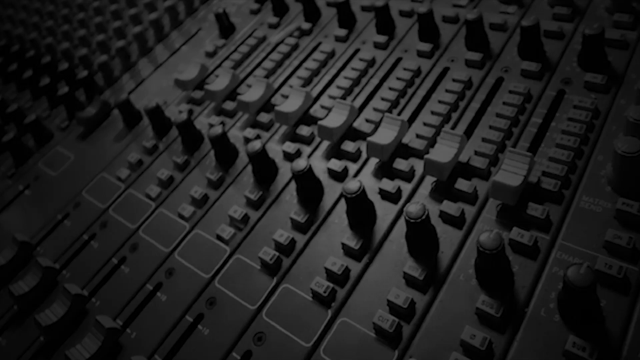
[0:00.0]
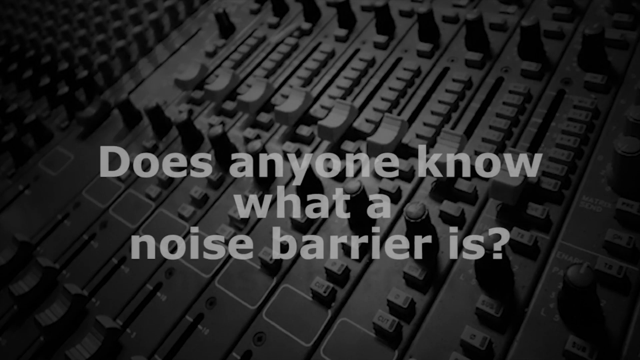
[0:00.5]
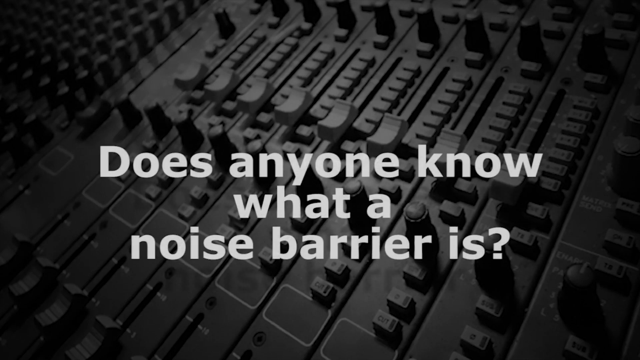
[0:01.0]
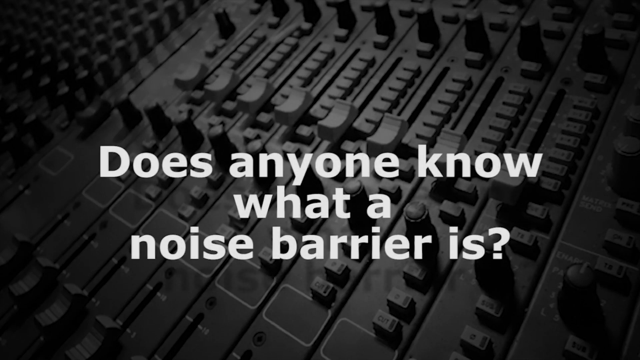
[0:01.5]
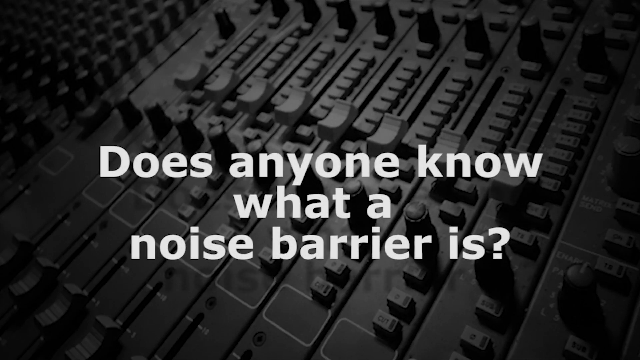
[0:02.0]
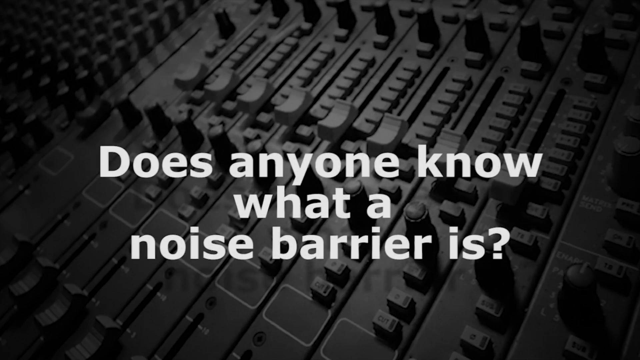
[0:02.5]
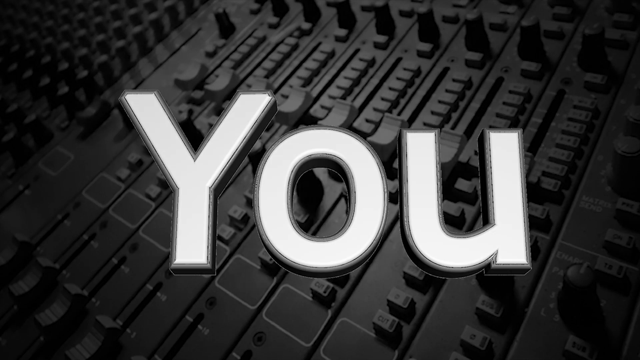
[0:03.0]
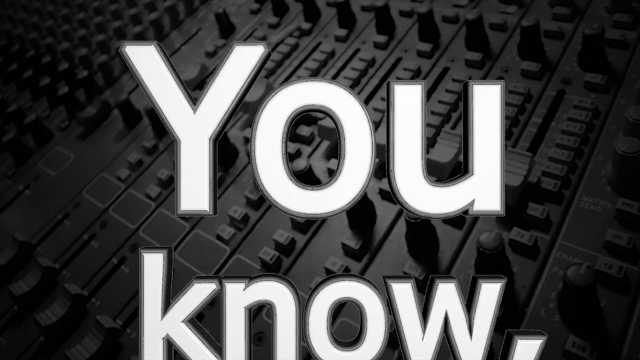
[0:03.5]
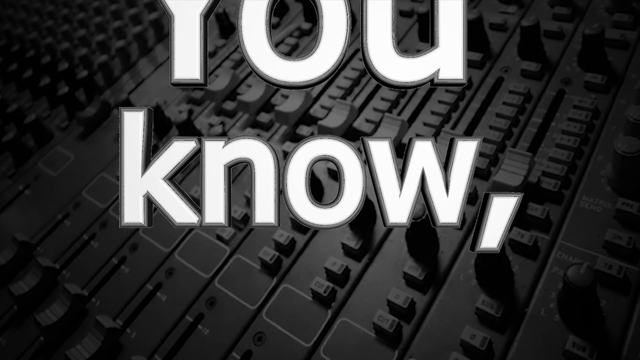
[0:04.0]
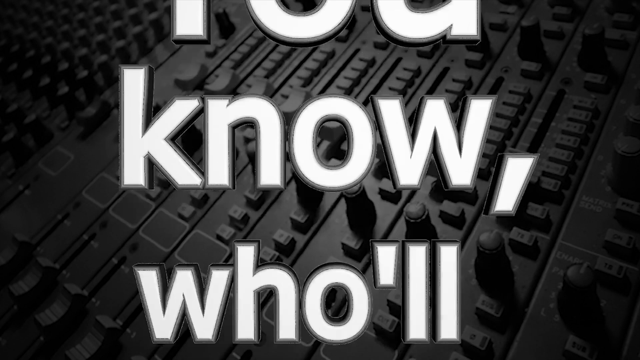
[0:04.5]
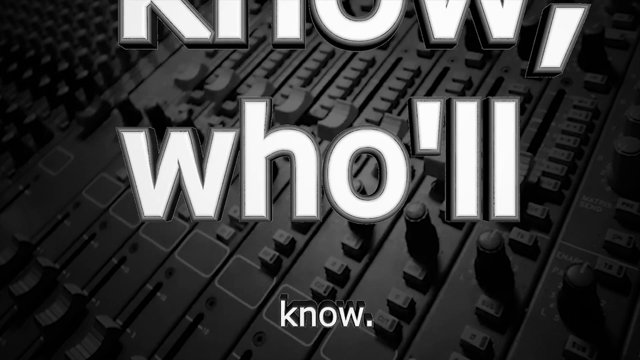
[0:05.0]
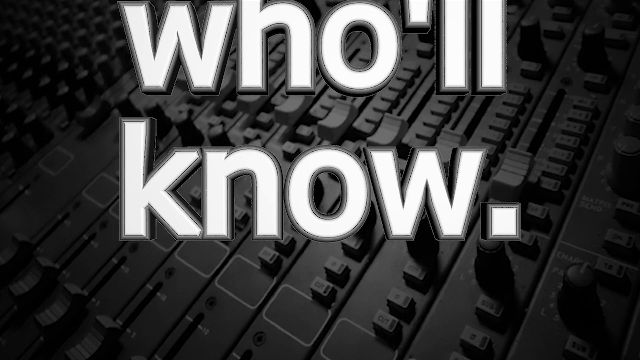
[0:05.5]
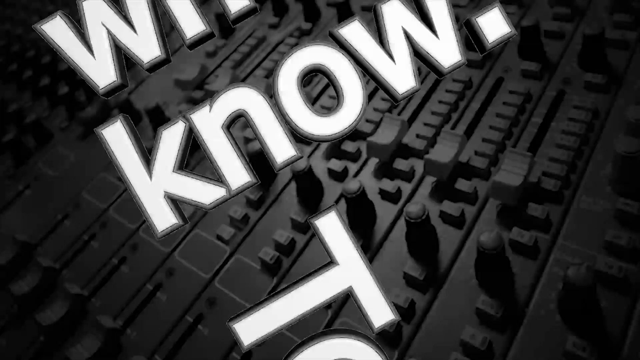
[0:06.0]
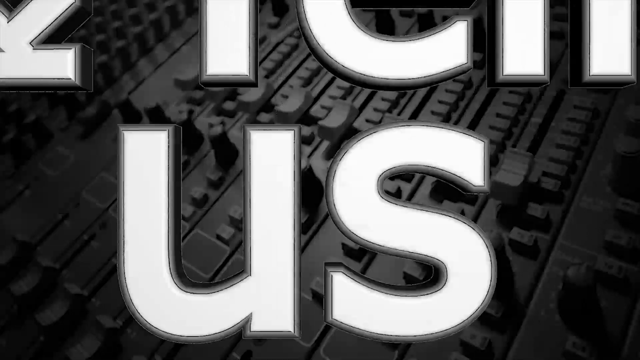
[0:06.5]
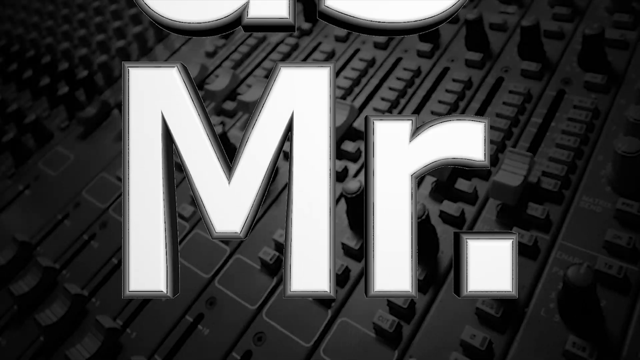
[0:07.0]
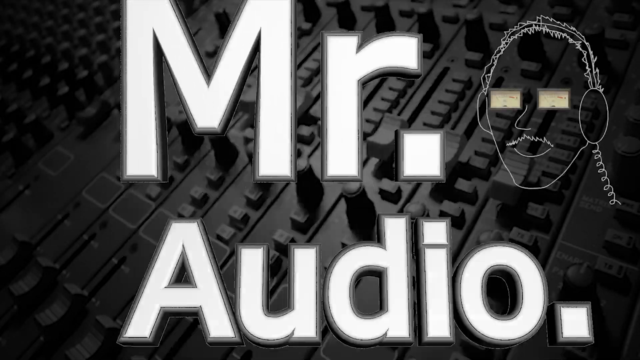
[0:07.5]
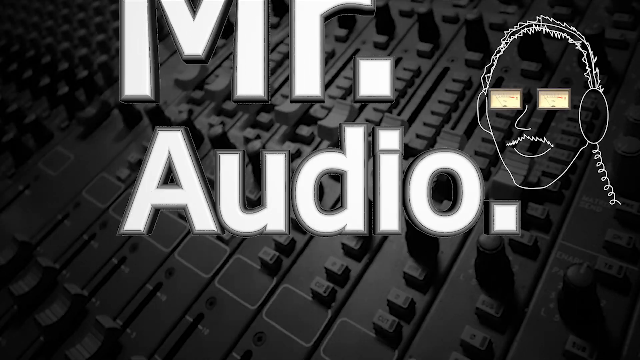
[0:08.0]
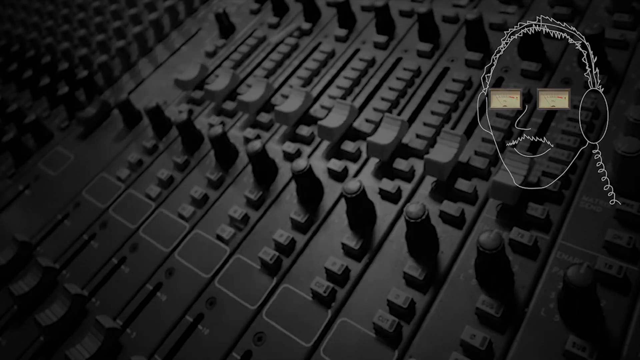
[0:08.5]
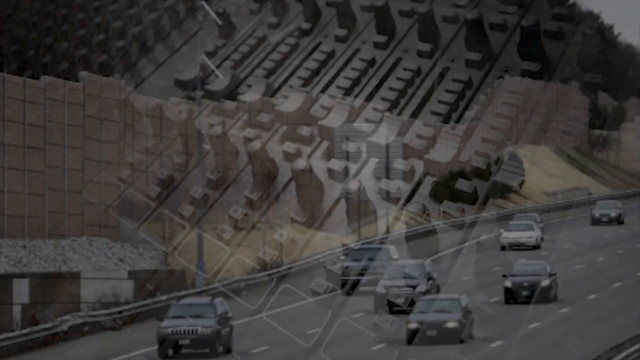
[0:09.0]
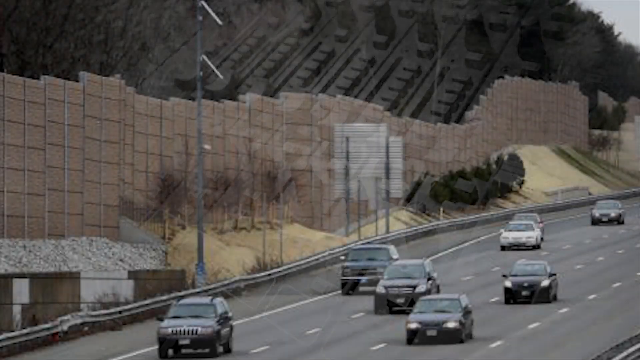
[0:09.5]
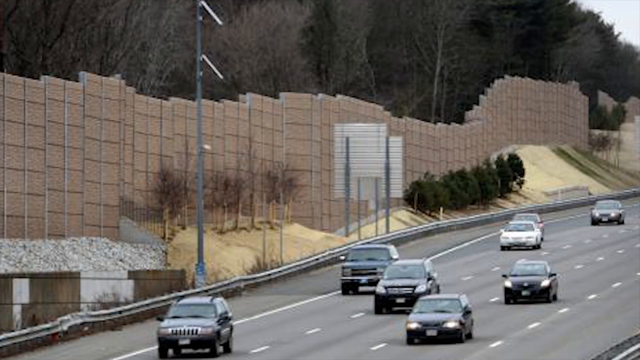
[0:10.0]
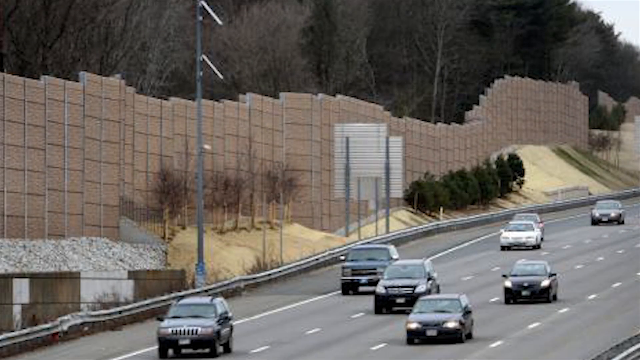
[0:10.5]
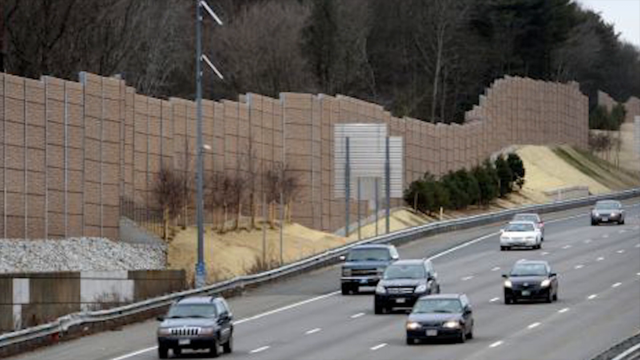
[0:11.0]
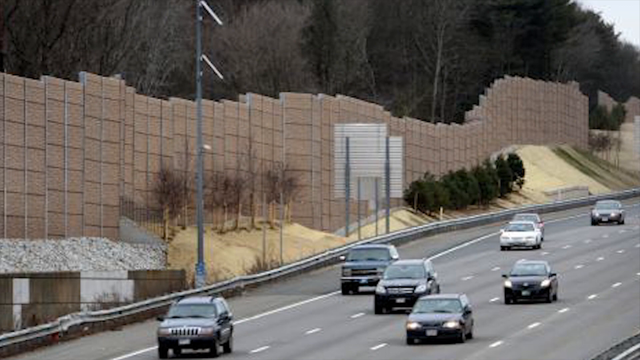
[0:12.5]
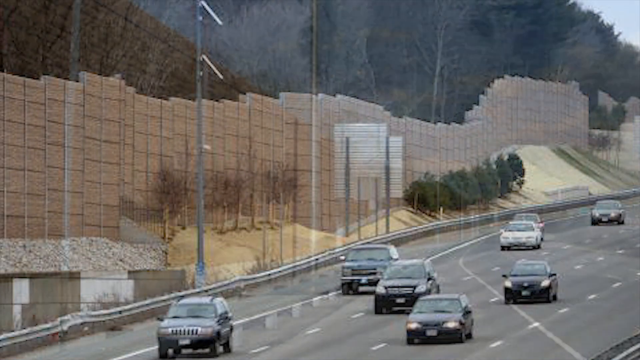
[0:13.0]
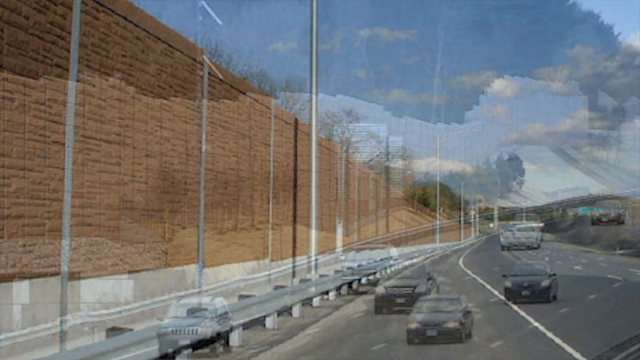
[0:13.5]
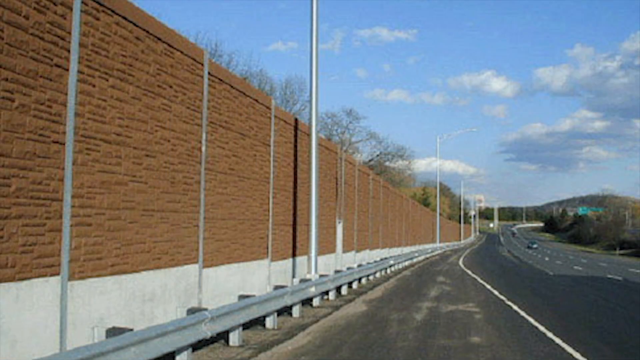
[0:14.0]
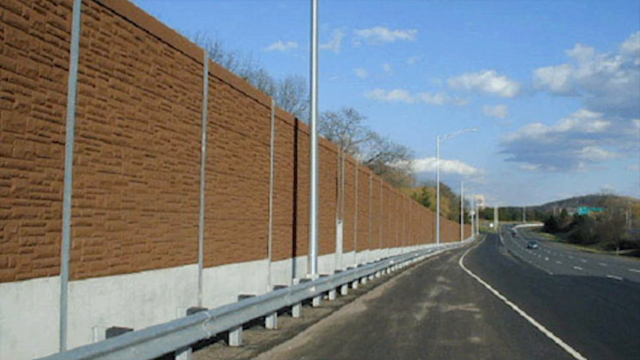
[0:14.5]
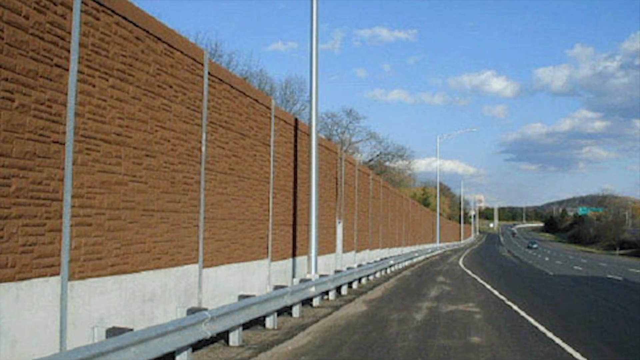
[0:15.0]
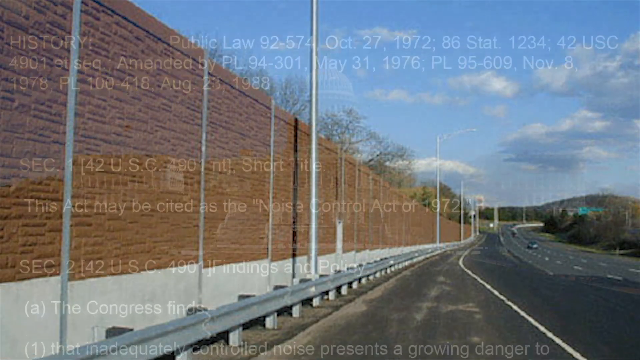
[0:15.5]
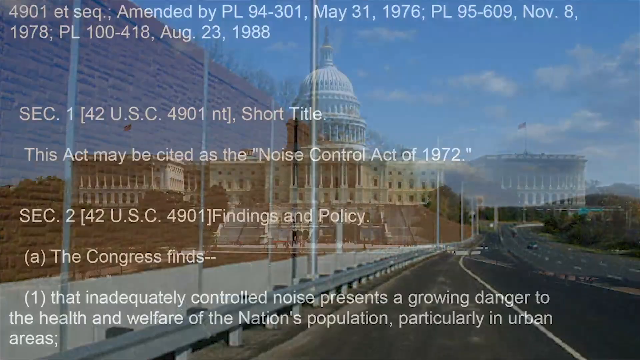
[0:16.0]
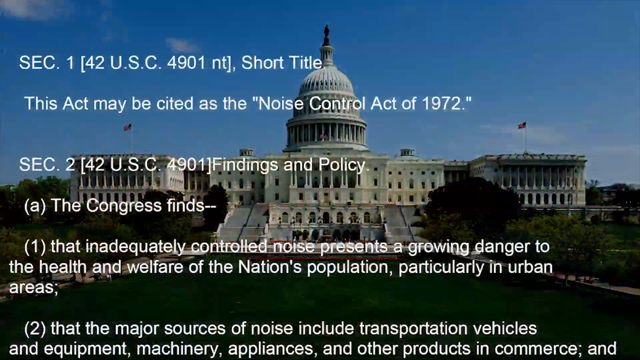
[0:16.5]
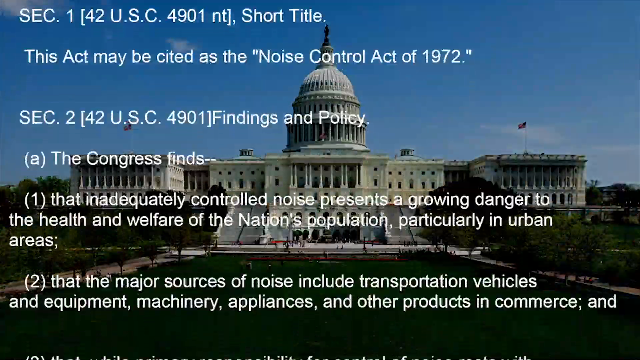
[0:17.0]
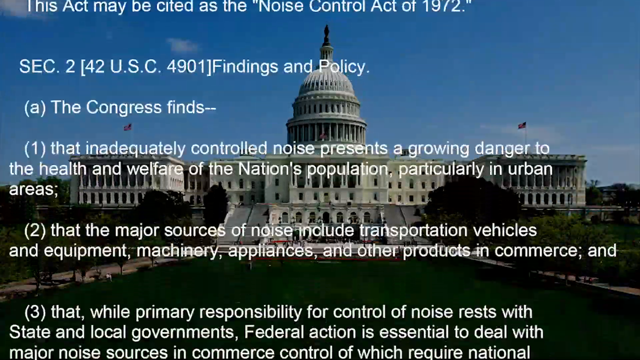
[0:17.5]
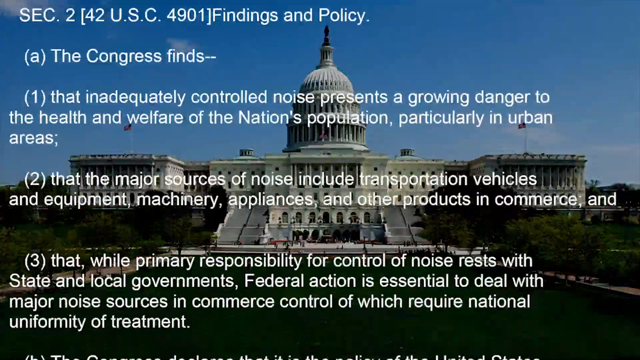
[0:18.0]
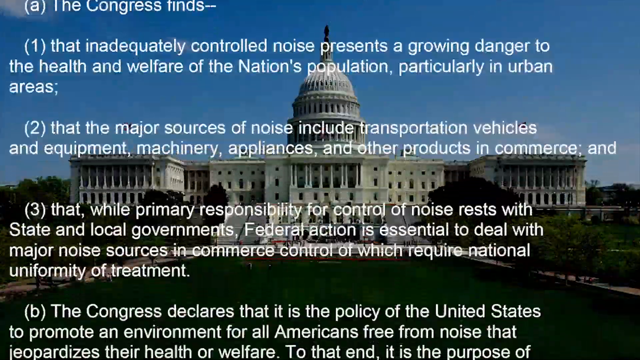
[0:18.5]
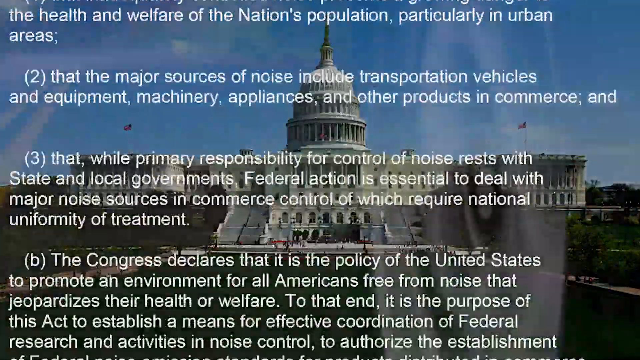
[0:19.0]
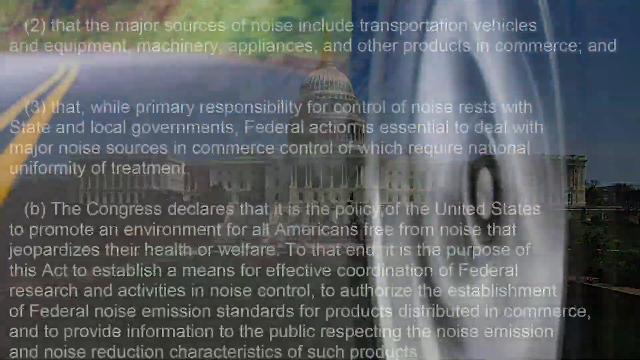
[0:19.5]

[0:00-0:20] The video begins on an audio recording and mixing console, apparently a generic approximation of a classic Solid State Logic recording and mixing console. The focus is on the small faders that normally sit above the big faders: eight small faders, with their accompanying buttons above them and pan knobs above those. It is a still photo of the console that appears to be in black and white; the mixing board appears gray and the channel faders white. The lighting appears to be in a slight vignette, with the edges of the board darker, bringing the focus to the center of the frame. Gradually the words "does anyone know what a noise barrier is?" fade in over the console in a bold white sans-serif font. The words abruptly disappear and are replaced by a large white word, "you", which folds down in a transition as if hinged on its upper edge and takes up about two-thirds of the screen from the center, with the mixing board still in the background. "You" rolls upward, revealing "know,"; that also rolls upward, revealing "who'll", and then "know.", all in white sans-serif font, so the sentence rolls upward over the console. The letters and words then turn counterclockwise, transitioning to the words "tell us Mr. Audio". Next to these words is a drawing in white outline of a man's face with a slight mustache, wearing headphones, with two audio VU meters for eyes; this is apparently Mr. Audio. The mixing console remains the background throughout this sequence. The video then dissolves to a highway with cars moving toward the camera, apparently eight cars in various lane positions. A sound barrier is prominent across two-thirds of the screen; it is beige or brownish-tan and appears to be 20 feet high all along the highway. Before the barrier there is gravel and apparently some yellow mulch material in which trees are planted. Behind the barrier is what appears to be rather dense forest growth. The barrier is apparently intended to muffle the sounds of the highway.